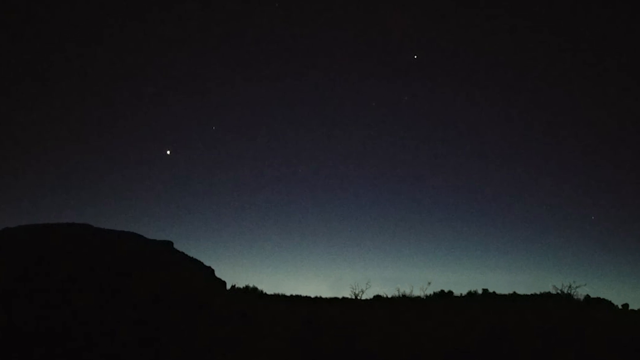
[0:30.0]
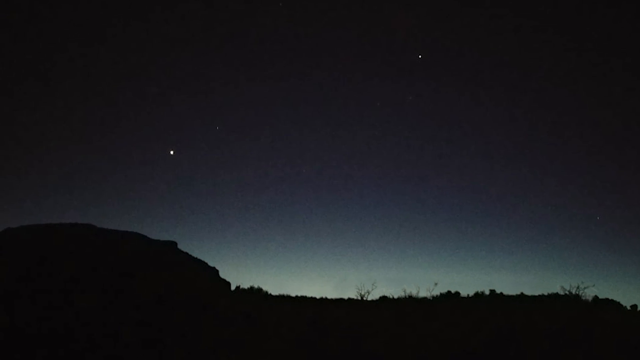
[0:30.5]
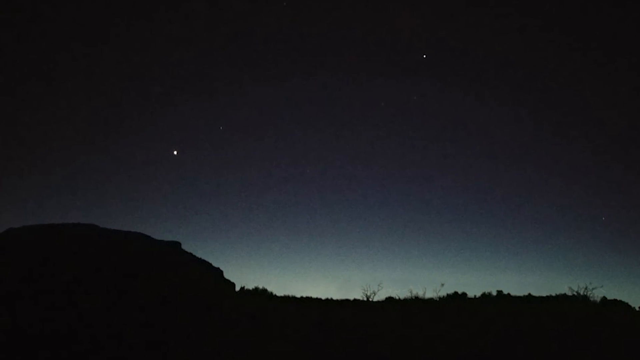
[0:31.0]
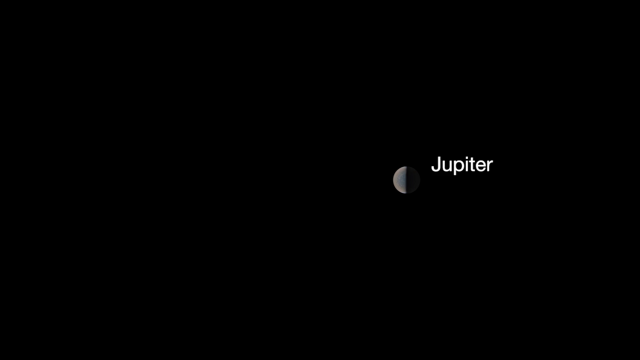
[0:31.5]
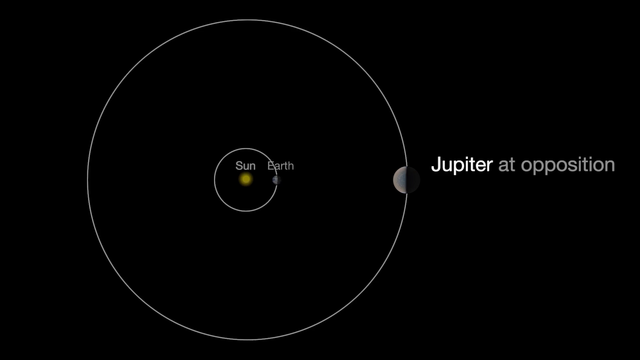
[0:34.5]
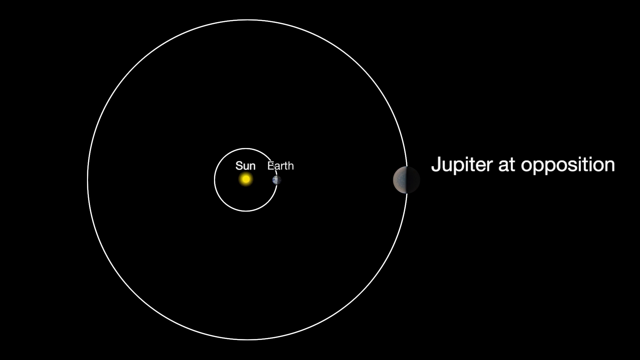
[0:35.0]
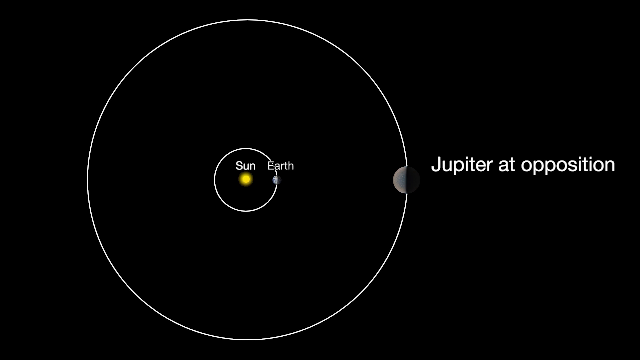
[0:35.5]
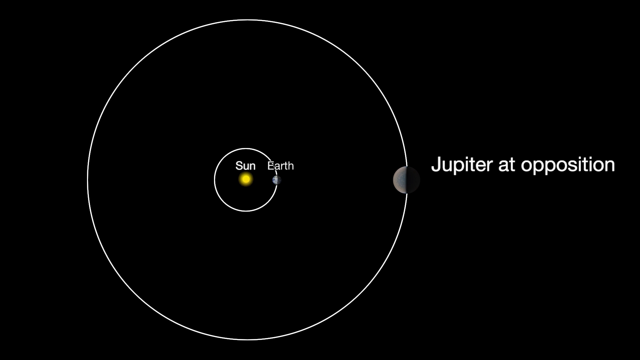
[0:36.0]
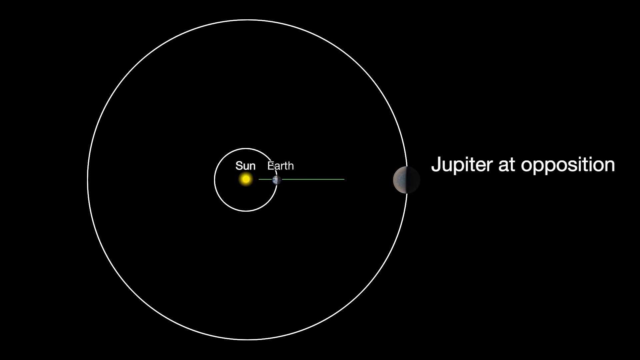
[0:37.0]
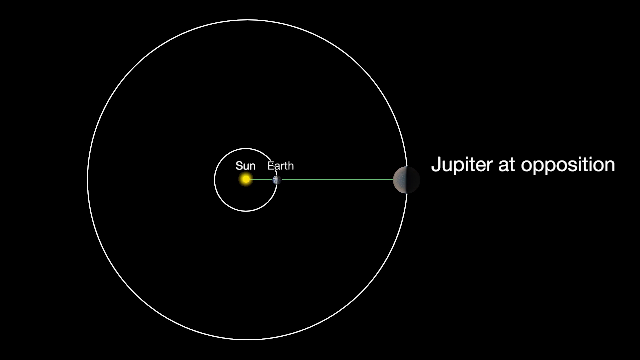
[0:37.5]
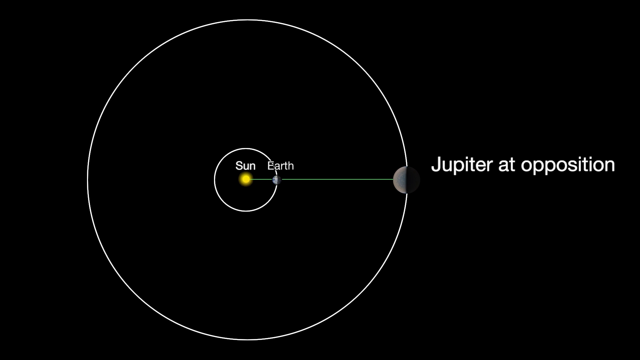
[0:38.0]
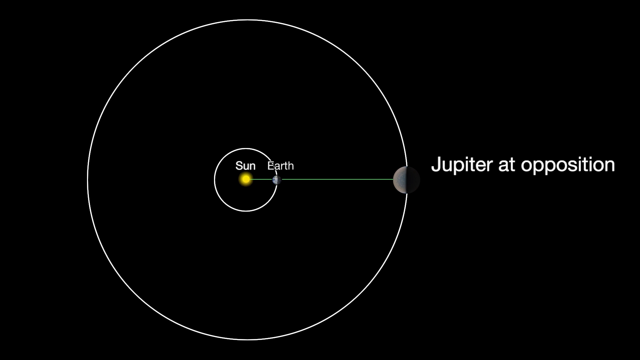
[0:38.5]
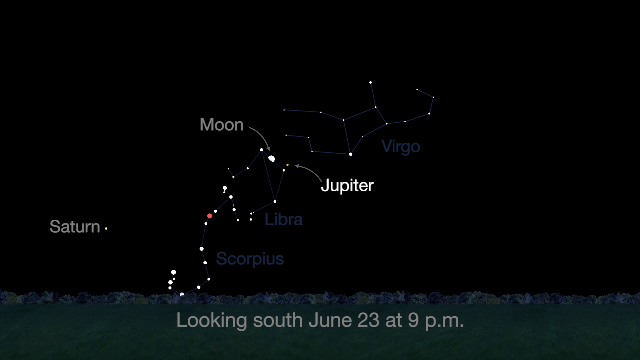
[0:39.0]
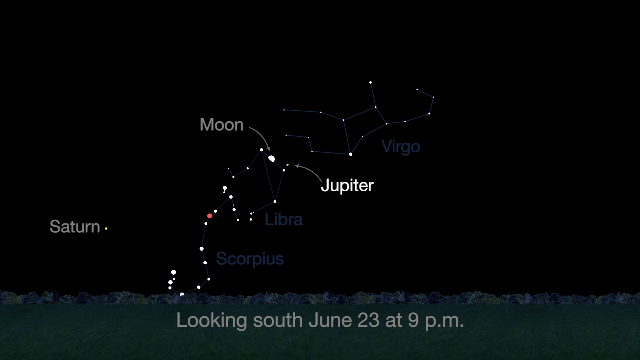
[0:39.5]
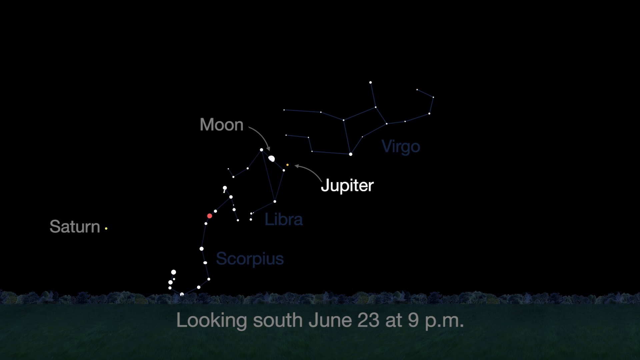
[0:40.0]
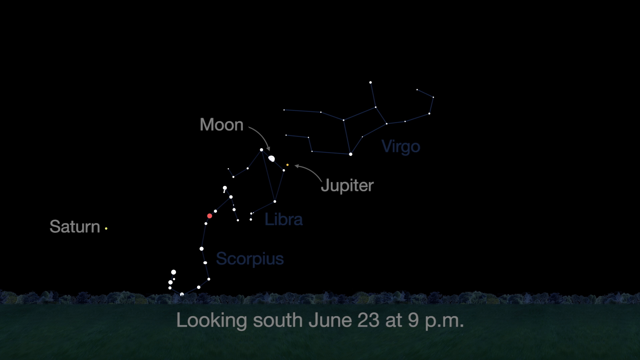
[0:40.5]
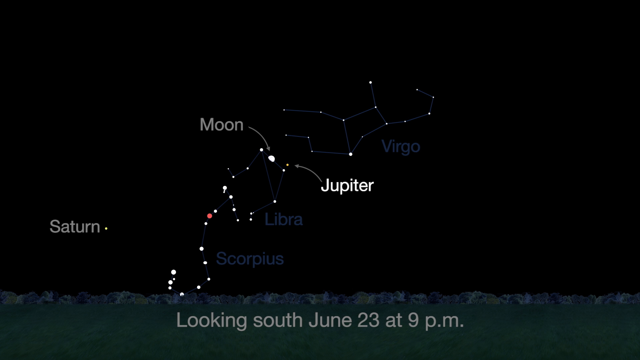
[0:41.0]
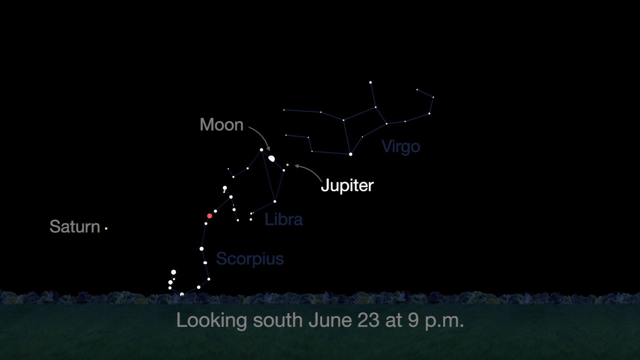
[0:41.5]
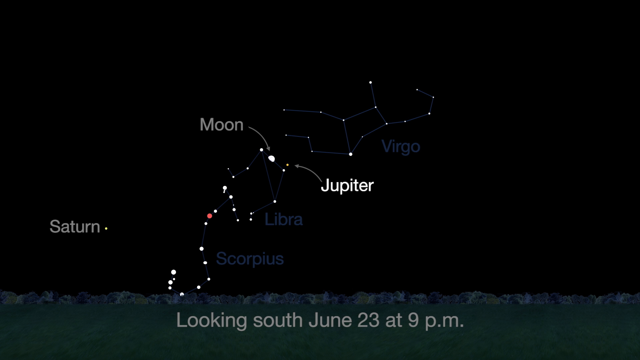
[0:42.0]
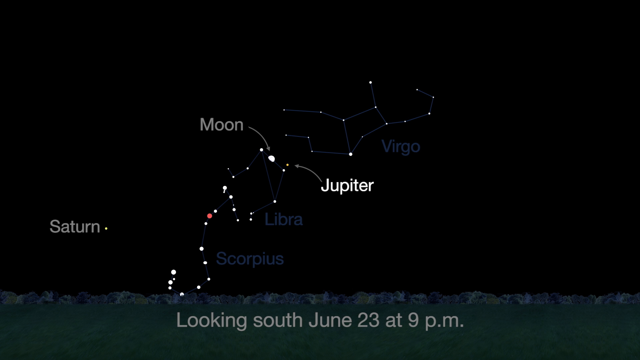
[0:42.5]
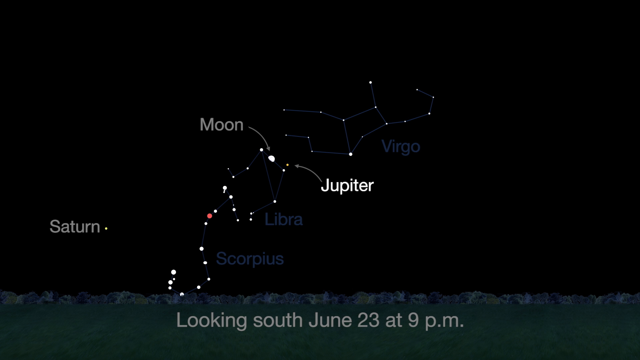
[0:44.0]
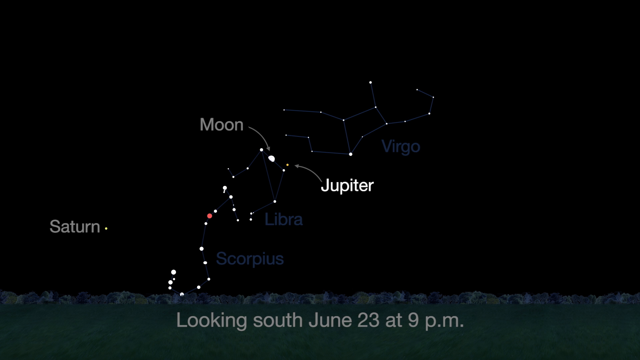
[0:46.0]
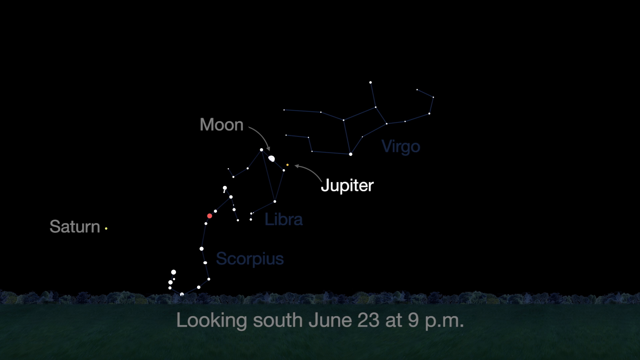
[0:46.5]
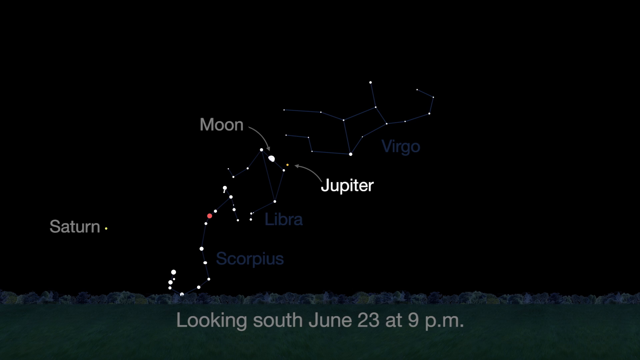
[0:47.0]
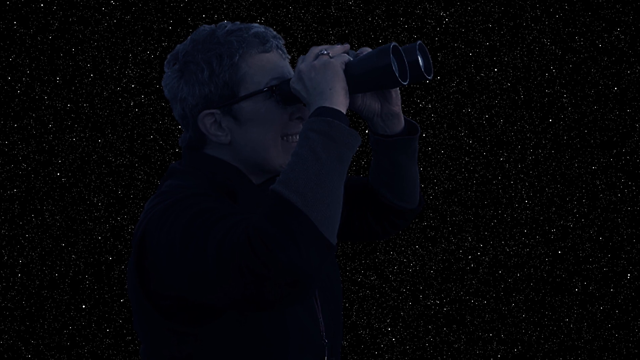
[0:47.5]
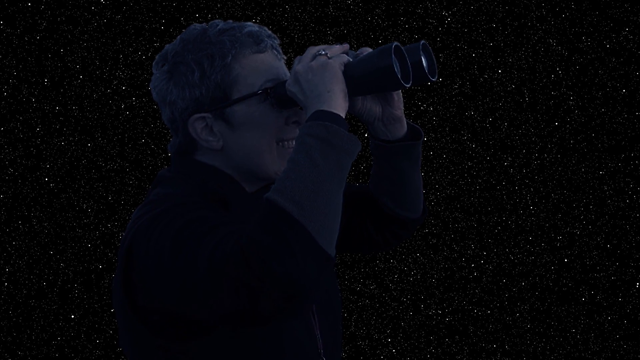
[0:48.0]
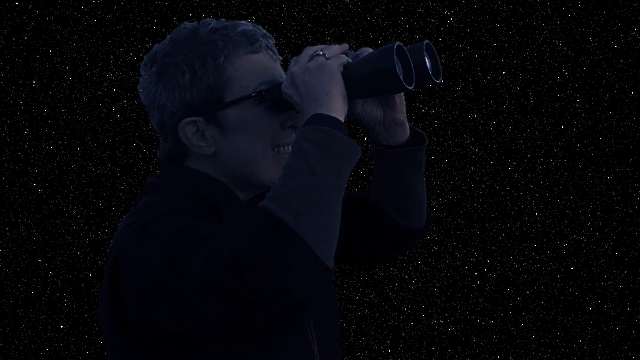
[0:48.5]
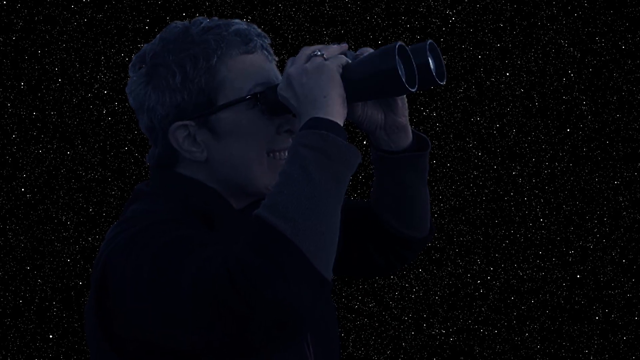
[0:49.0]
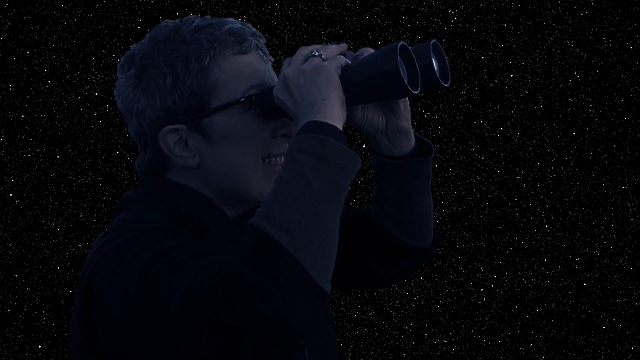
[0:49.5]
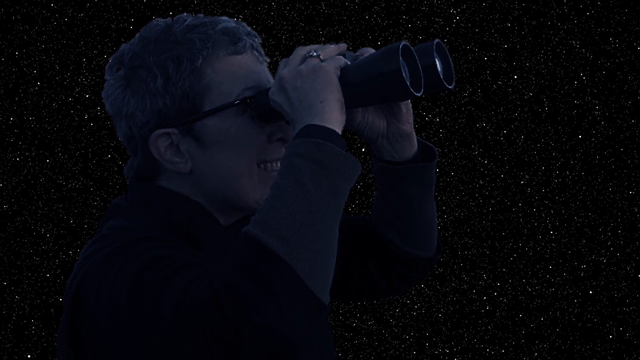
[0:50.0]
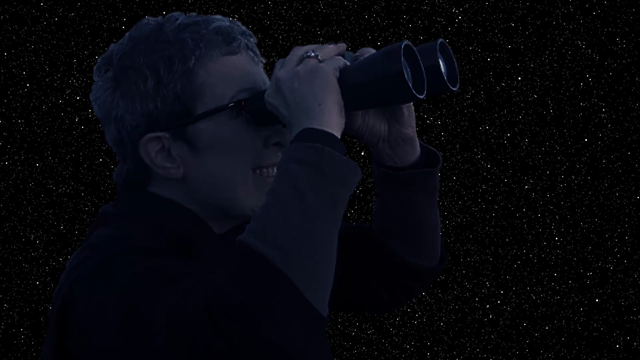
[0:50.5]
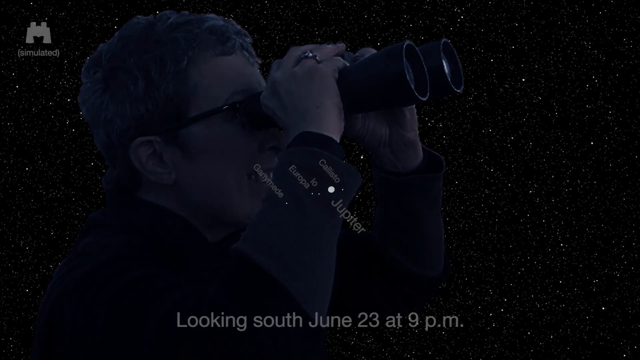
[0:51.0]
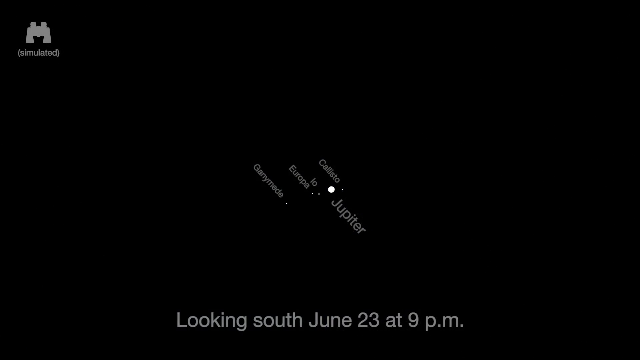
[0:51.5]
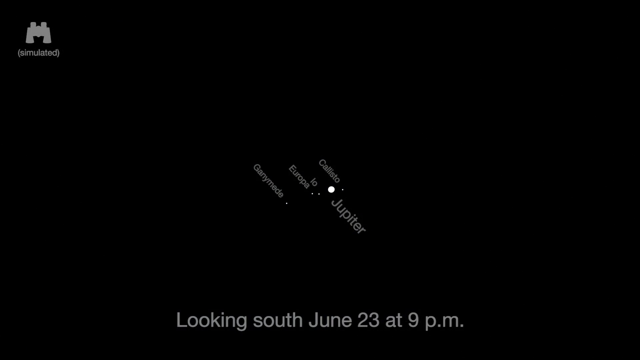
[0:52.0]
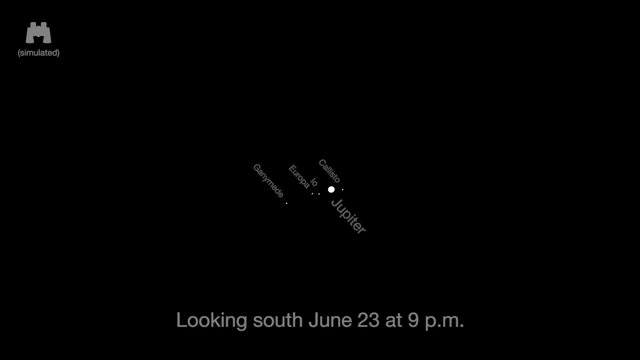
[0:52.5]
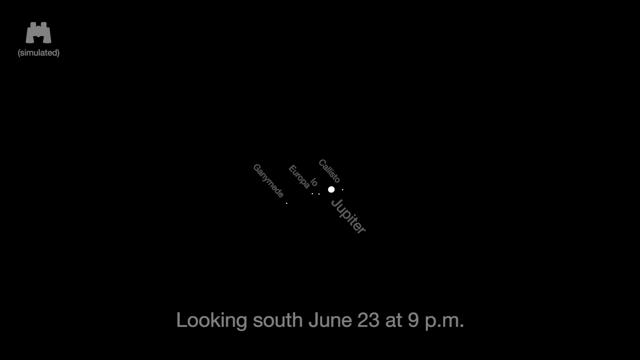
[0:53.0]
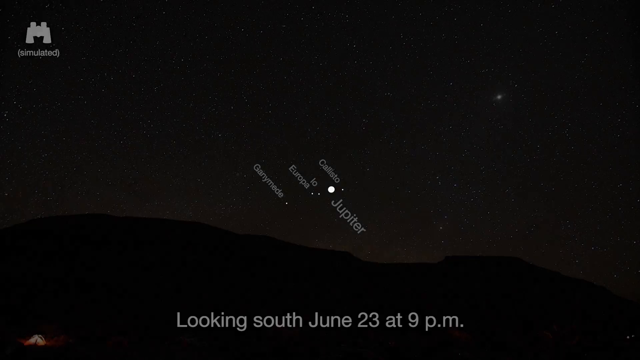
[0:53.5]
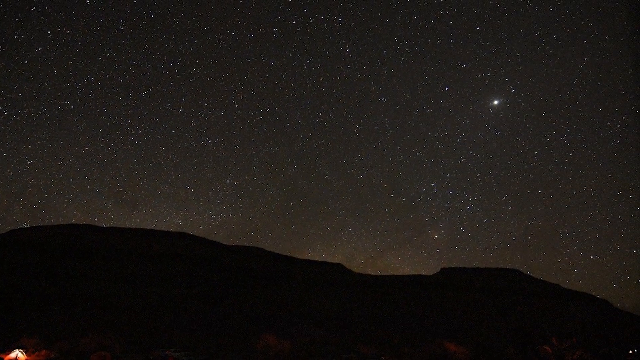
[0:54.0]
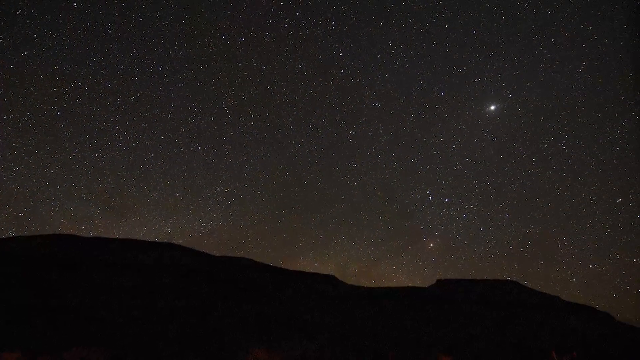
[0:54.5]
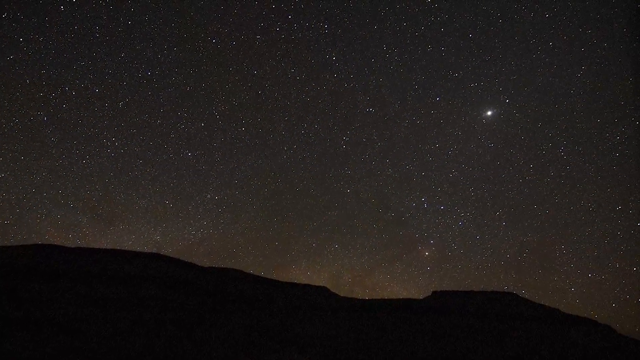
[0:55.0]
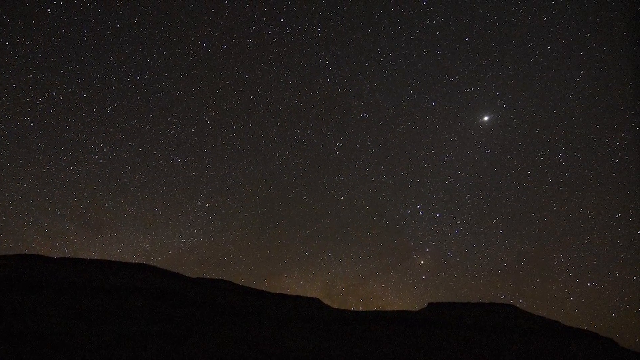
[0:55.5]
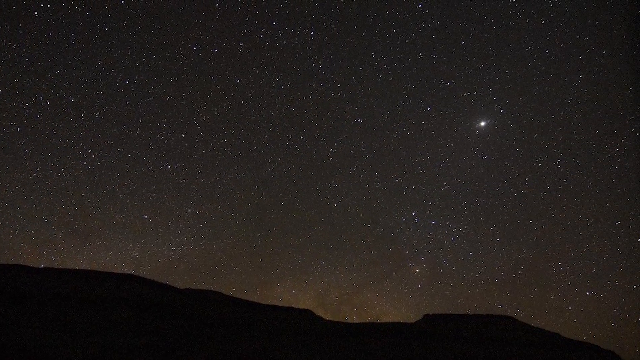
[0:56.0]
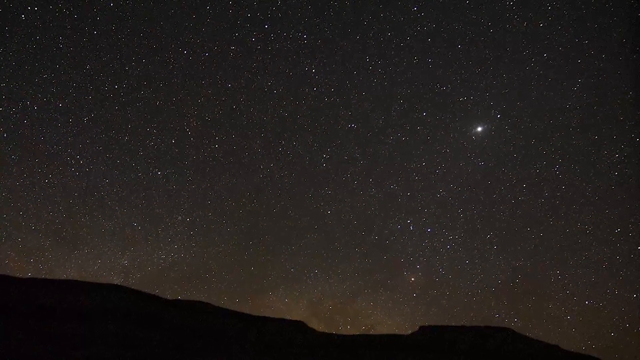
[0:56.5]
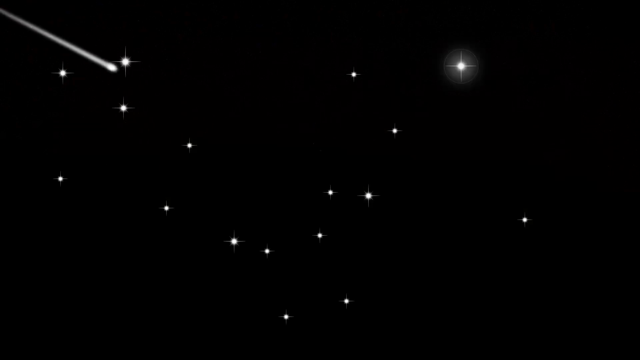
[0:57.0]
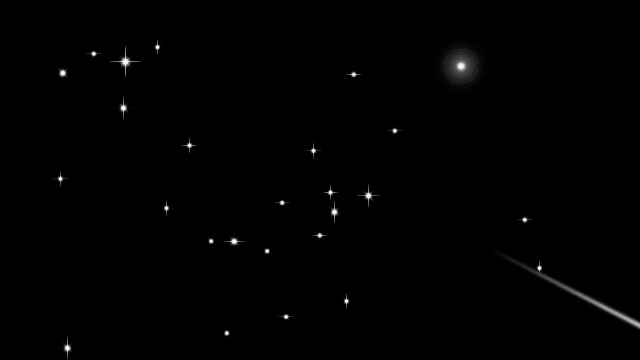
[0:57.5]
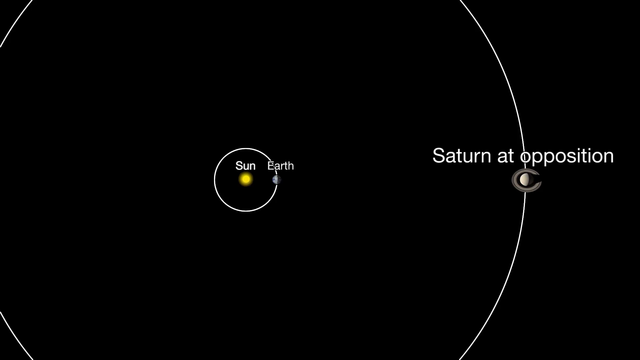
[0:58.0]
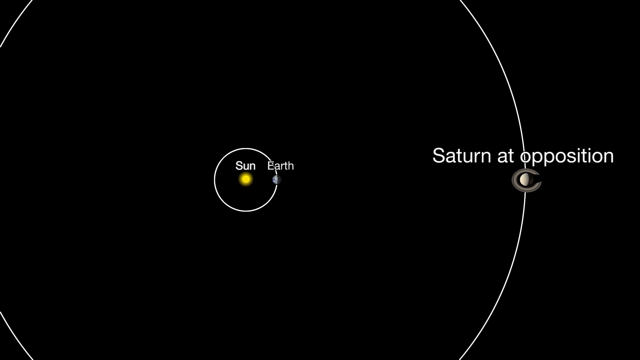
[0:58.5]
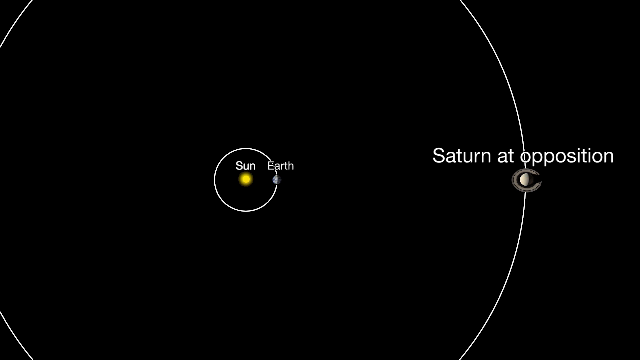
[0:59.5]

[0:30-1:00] Jupiter appears against the night sky, half visible and half covered. A diagram then shows the orbit of Jupiter against the orbit of Earth and the Sun, with Jupiter at opposition: a green horizontal line runs from the Sun through Earth and then through Jupiter. A sky map looking south on June 23rd at 9 p.m. shows the moon in the middle, with Jupiter close to it on the right, along with the constellations Libra, Scorpius near the horizon, and Virgo far from the moon, plus Saturn at the bottom left. A cutout of a man using binoculars while staring at the night sky is also shown. Another view, which says "looking south at June 23rd at 9 p.m.", shows Jupiter as a large white dot, the largest planet there, with its moons Callisto, Io, Europa and Ganymede. The scene then changes to a landscape that looks like a desert, in silhouette and covered in darkness, and the video pans to a star, or possibly a planet, in the sky. An animation of the night sky follows, with a shooting star streaking across.